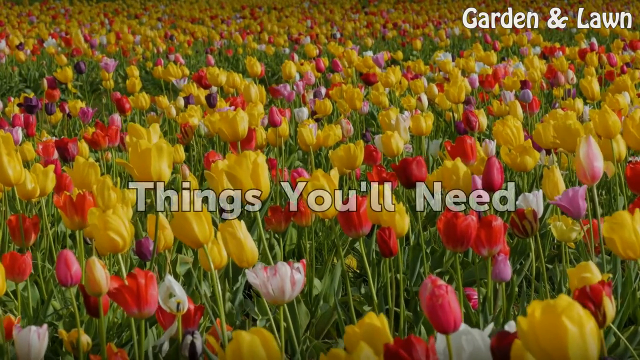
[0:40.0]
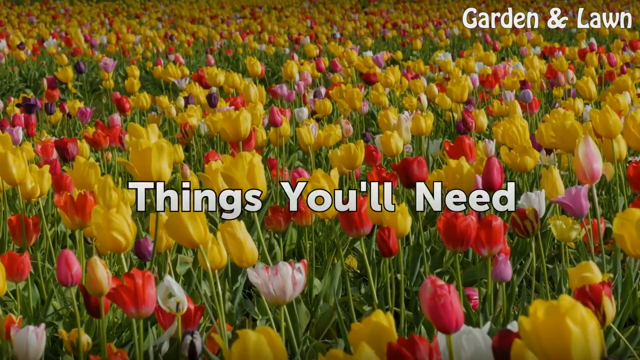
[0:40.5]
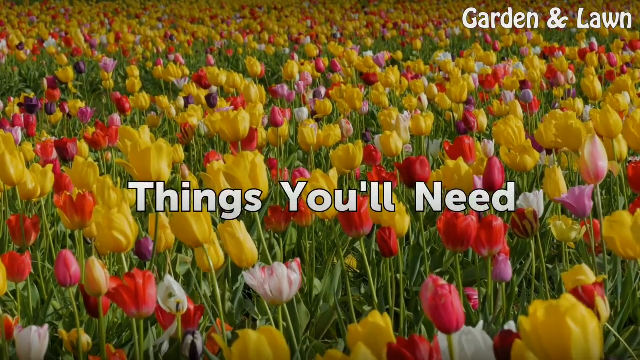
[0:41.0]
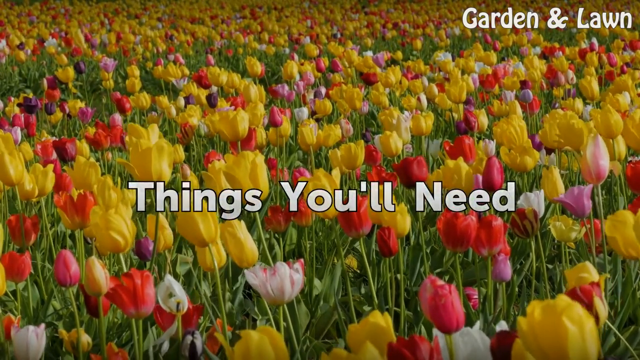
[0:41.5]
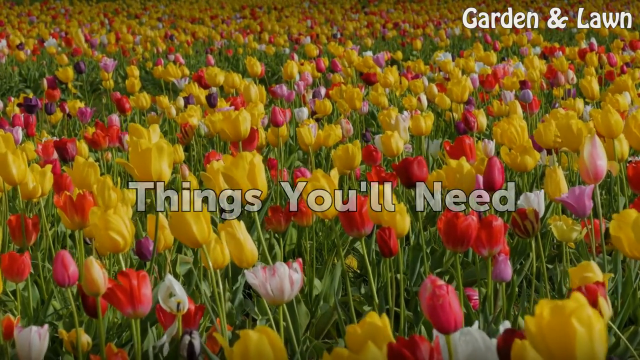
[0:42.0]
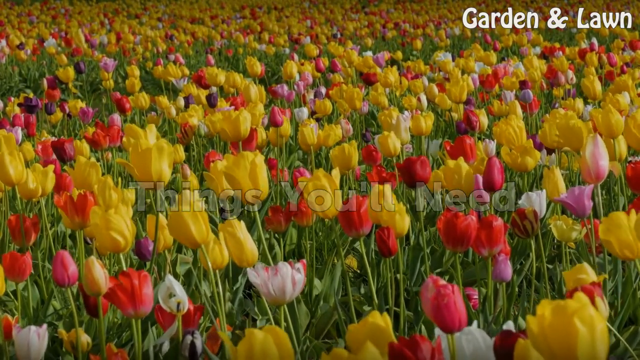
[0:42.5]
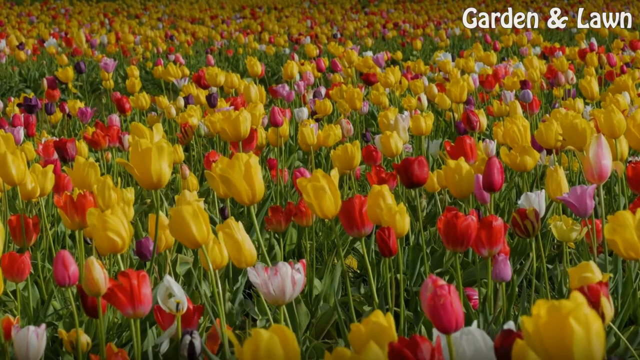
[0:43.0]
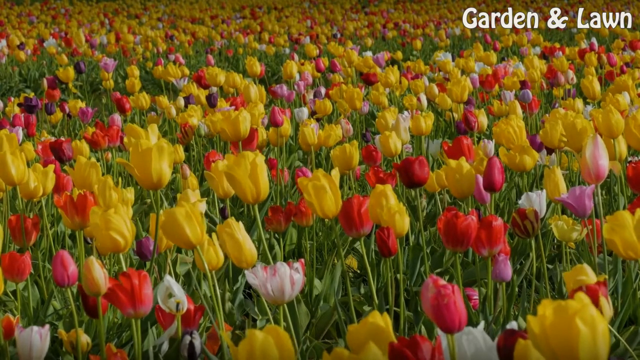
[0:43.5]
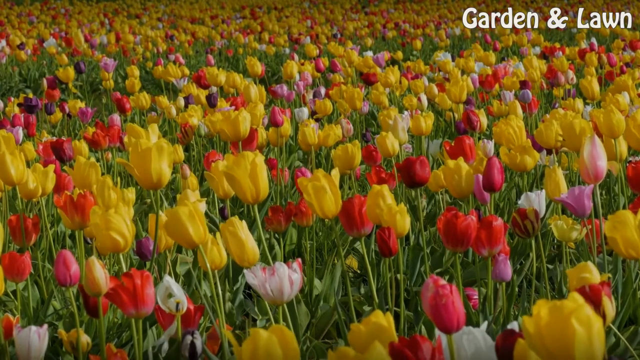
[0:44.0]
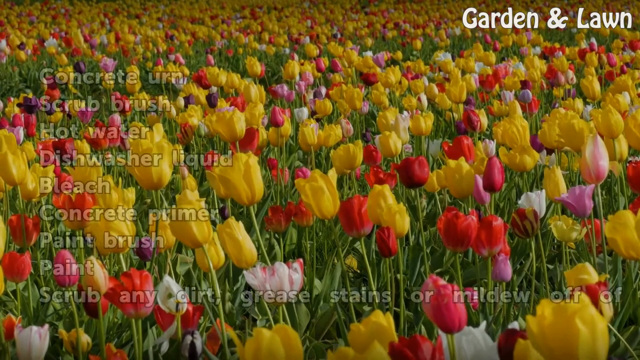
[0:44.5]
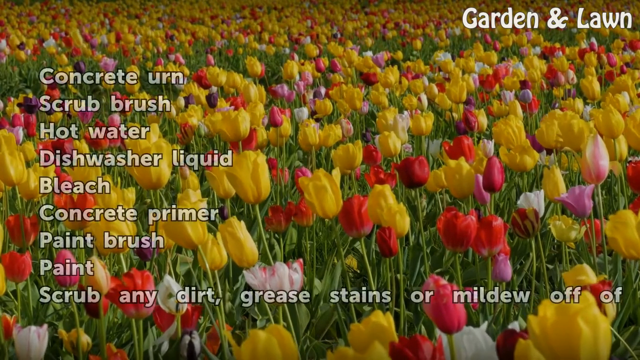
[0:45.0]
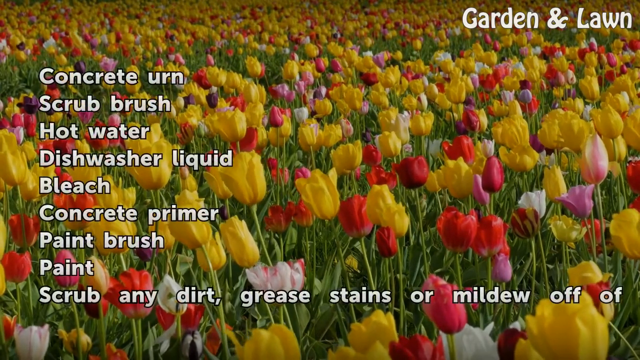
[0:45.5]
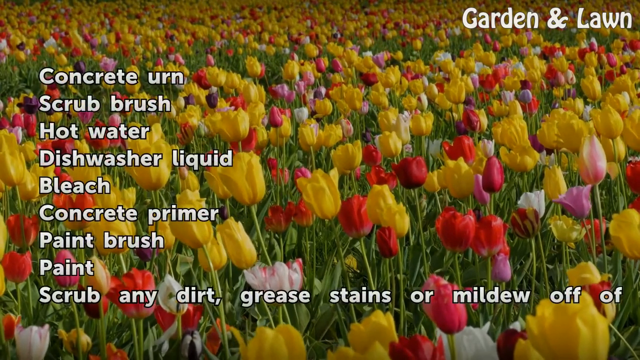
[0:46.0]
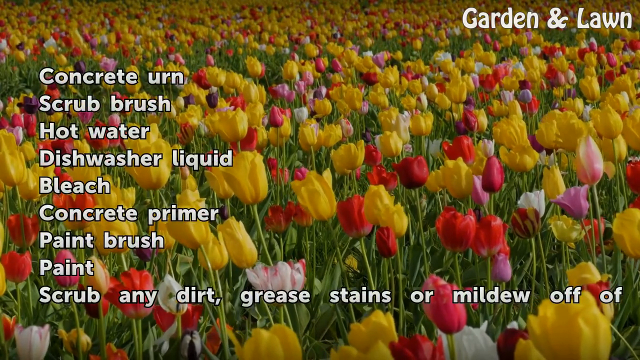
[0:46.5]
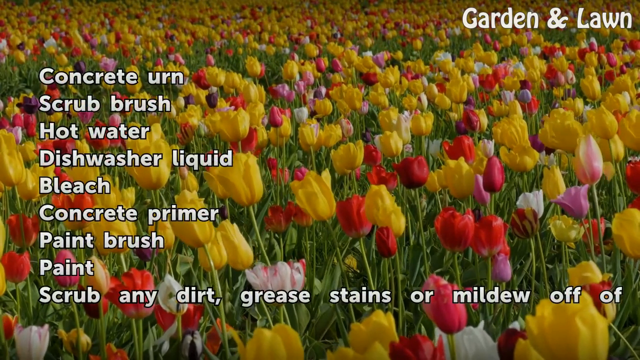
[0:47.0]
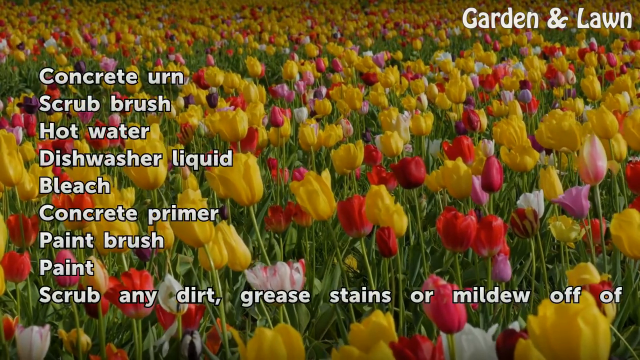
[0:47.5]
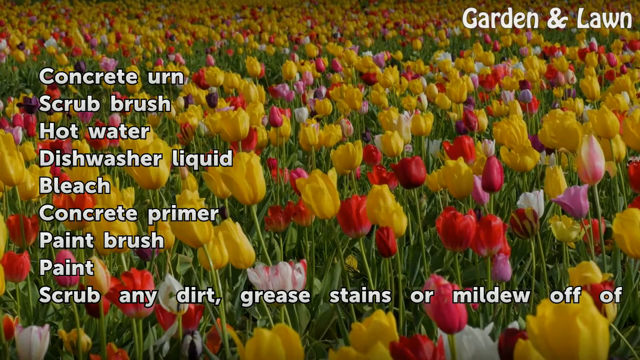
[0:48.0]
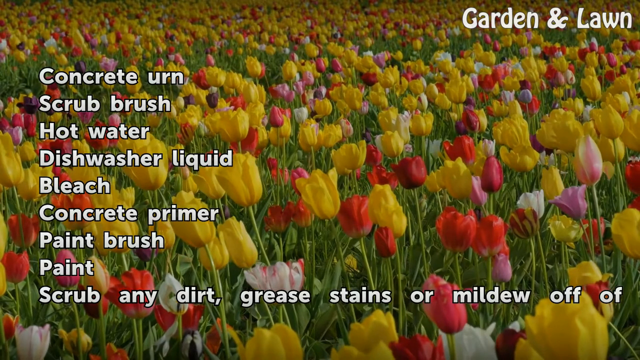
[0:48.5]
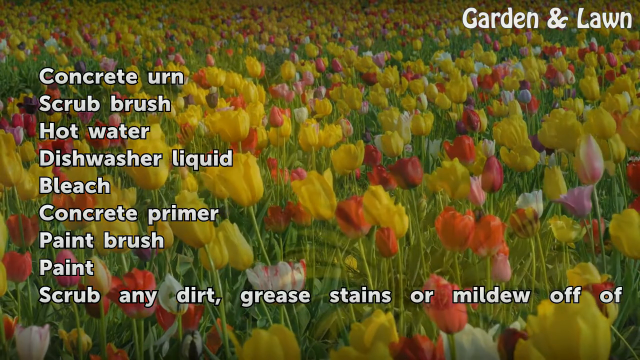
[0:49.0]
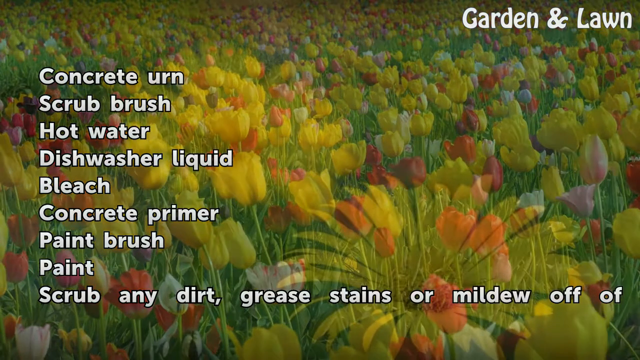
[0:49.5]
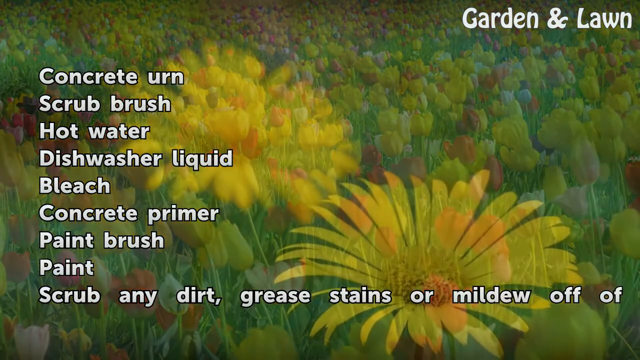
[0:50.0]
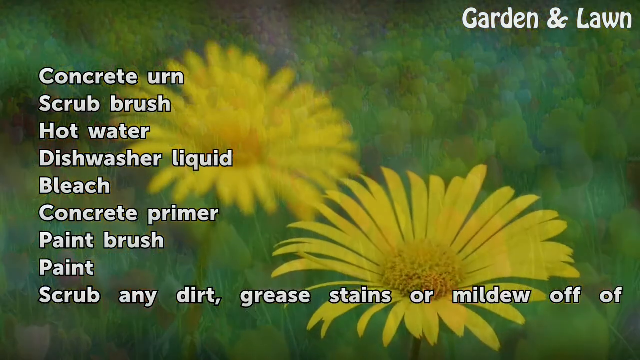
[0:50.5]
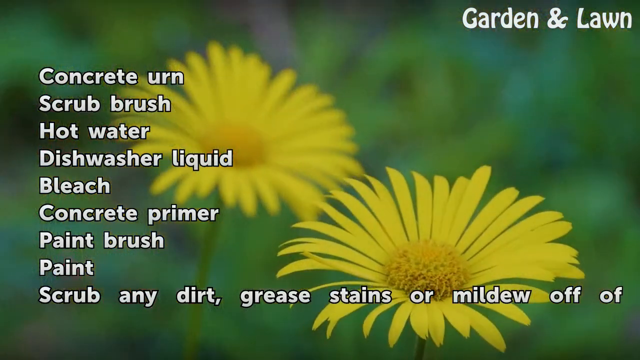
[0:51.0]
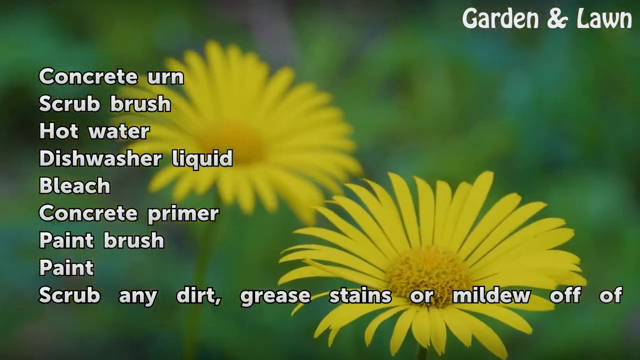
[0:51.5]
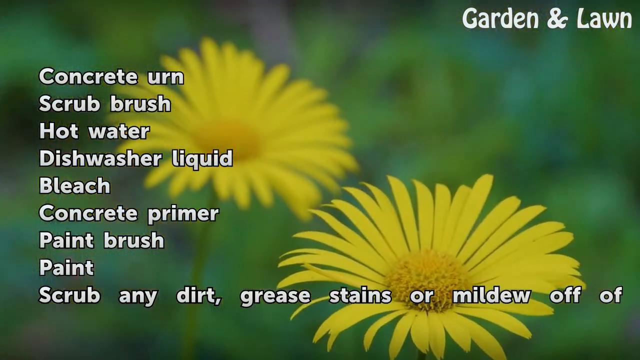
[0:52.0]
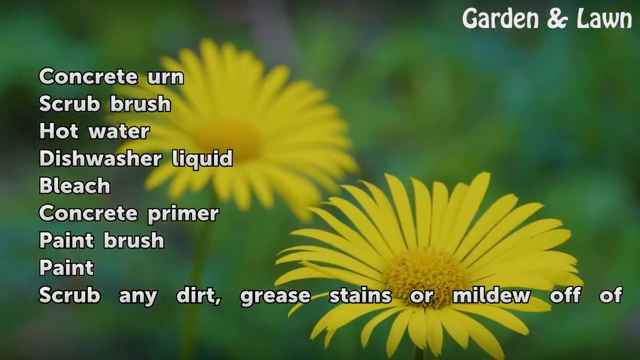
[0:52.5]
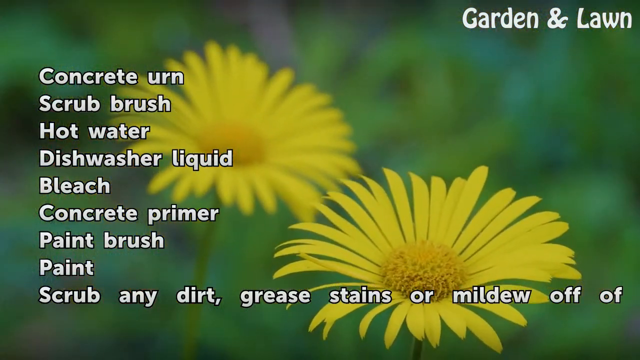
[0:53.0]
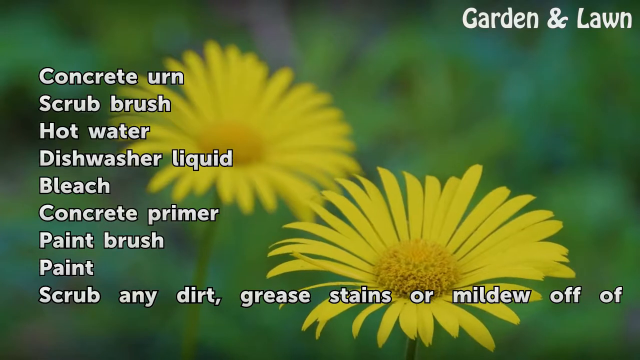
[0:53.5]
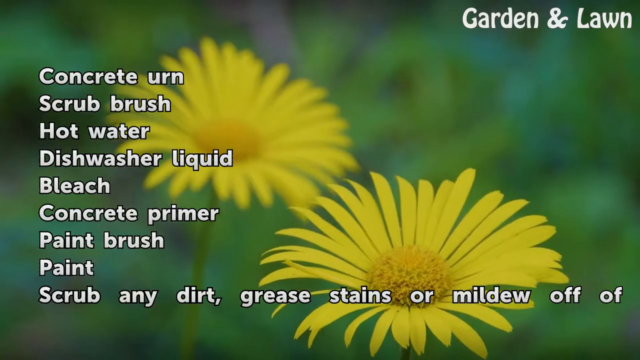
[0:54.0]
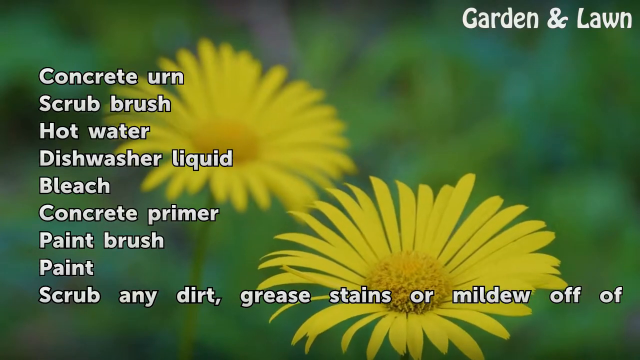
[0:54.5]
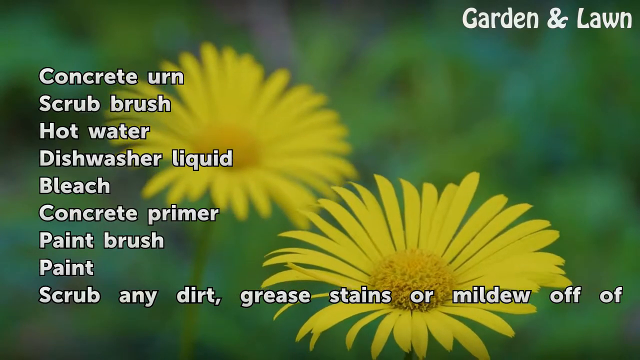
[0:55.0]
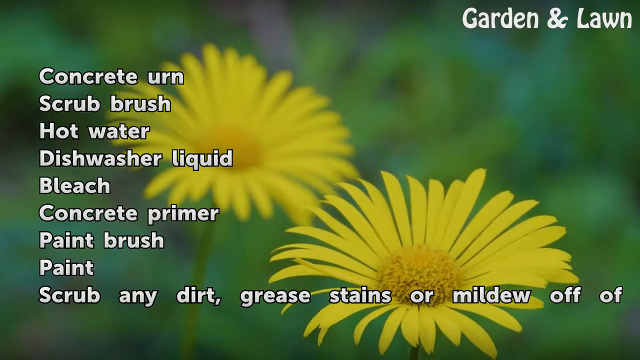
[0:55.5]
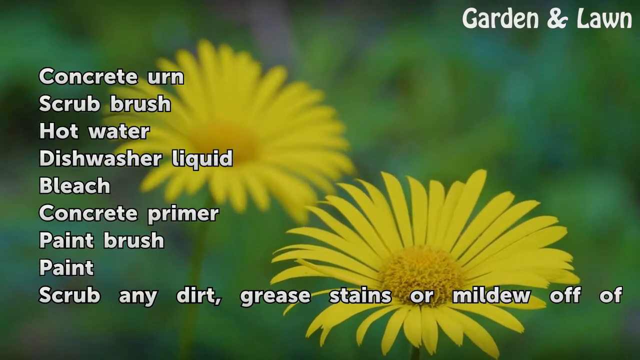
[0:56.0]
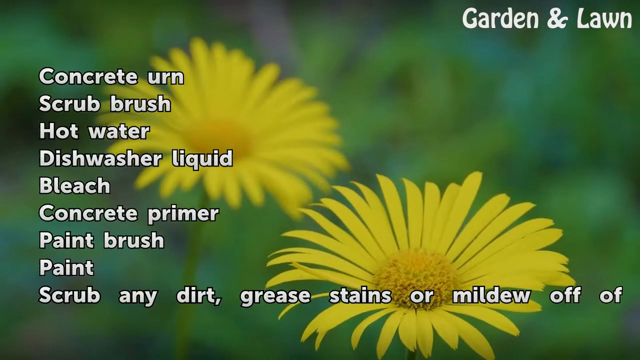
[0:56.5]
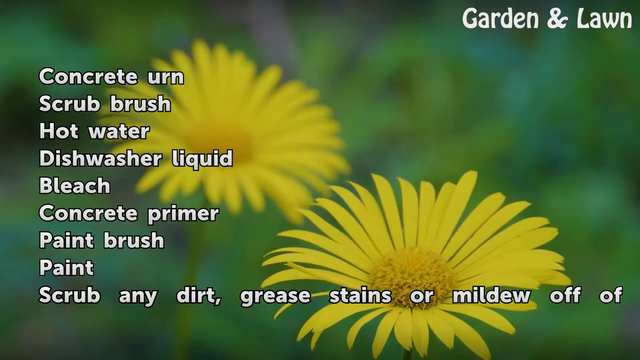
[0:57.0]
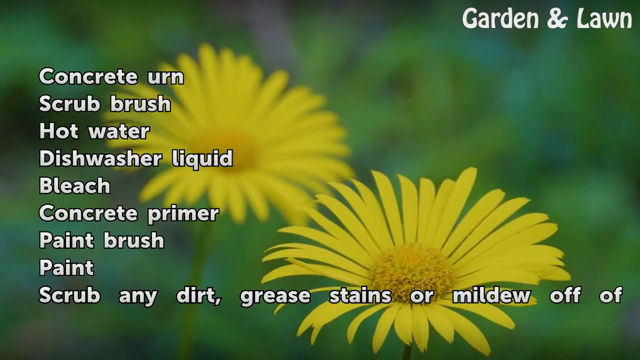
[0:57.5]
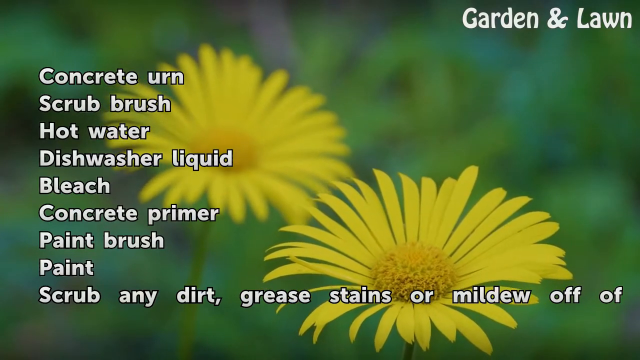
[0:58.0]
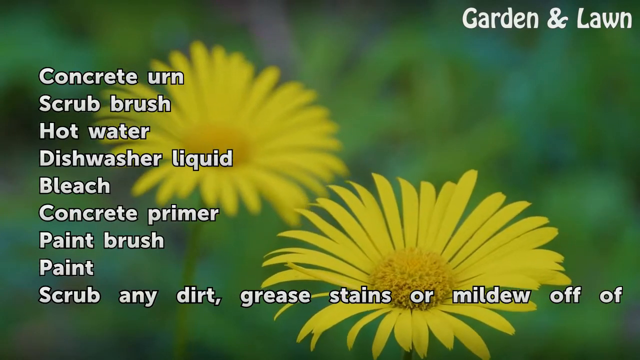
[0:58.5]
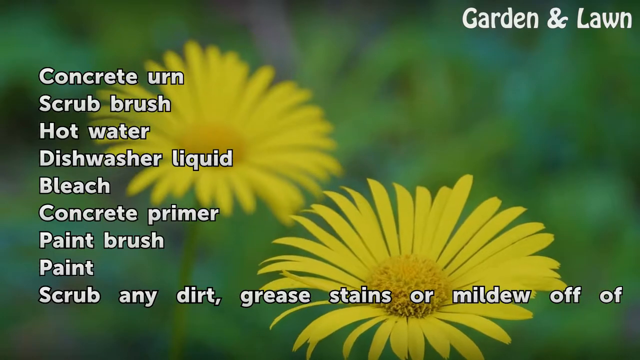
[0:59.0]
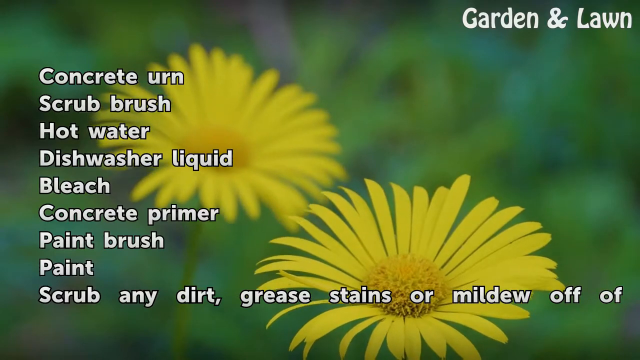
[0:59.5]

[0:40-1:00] A pop-up title reads "things you will need," then fades out, and more text slowly pops up starting from the left side over the same tulip footage. It reads: "concrete, urn, scrub, brush, hot water, dish water, liquid, bleach, concrete primer, paint brush, paint" and then "scrub any dirt, grease, stains or mildew off of." While this list is still on screen, the background changes to a close-up of two flowers that look like sunflowers or something resembling them, though the species is unclear. In the upper right corner is what looks like a logo or possibly the channel name, reading "garden and lawn."